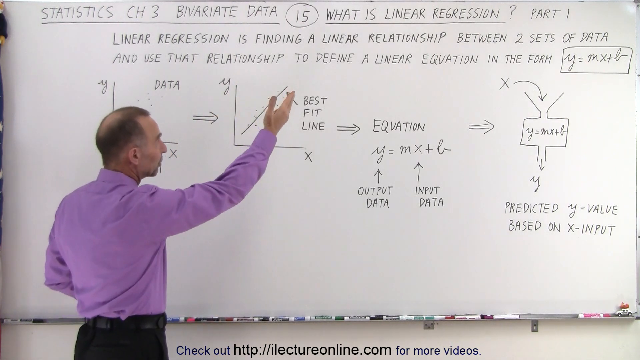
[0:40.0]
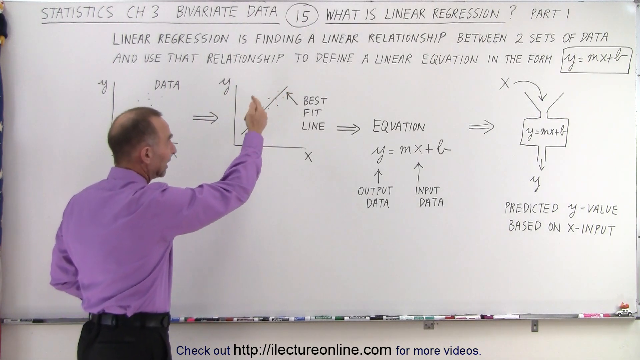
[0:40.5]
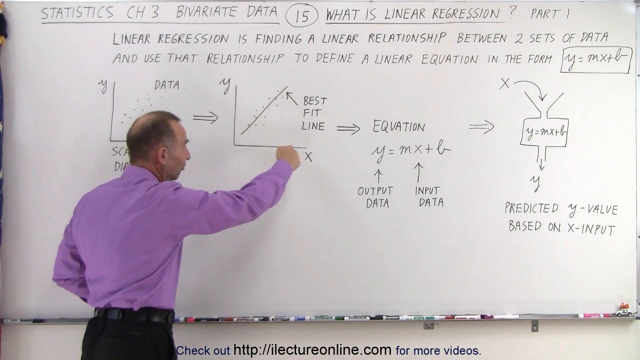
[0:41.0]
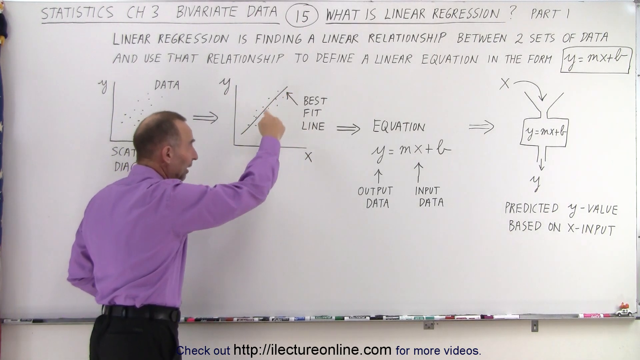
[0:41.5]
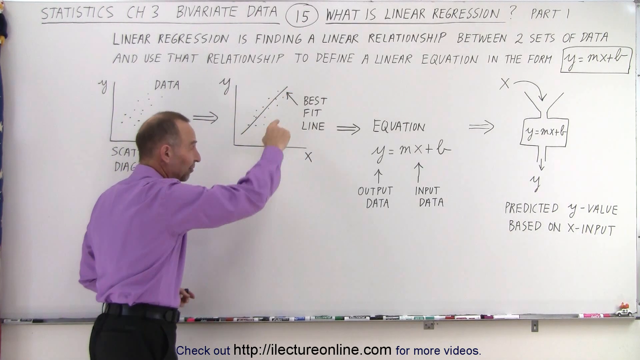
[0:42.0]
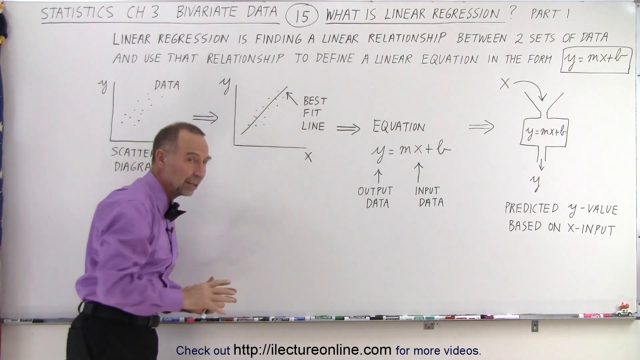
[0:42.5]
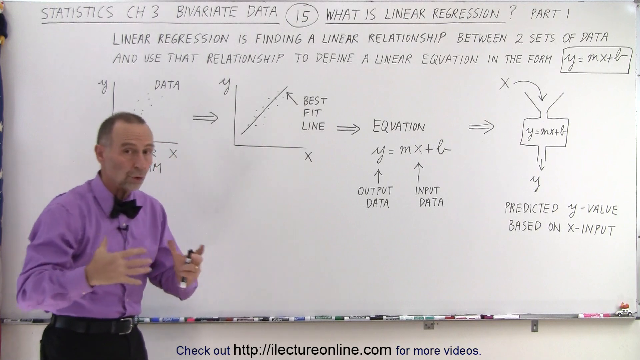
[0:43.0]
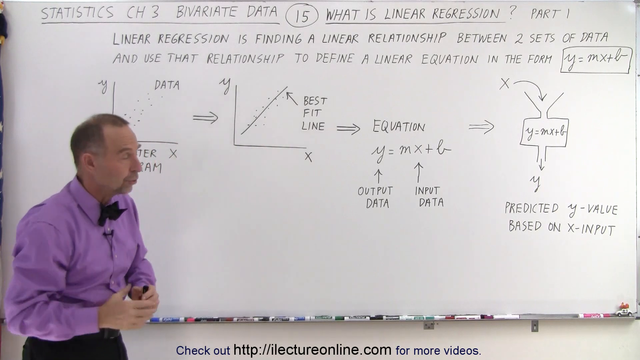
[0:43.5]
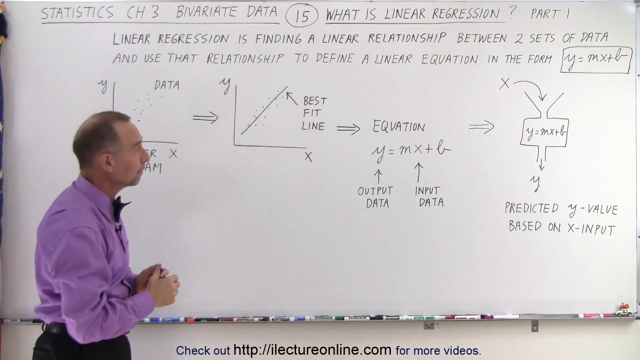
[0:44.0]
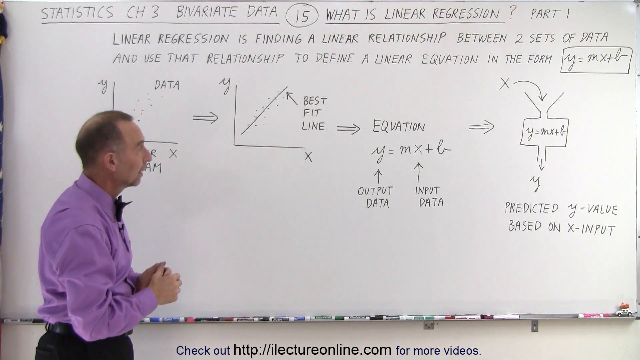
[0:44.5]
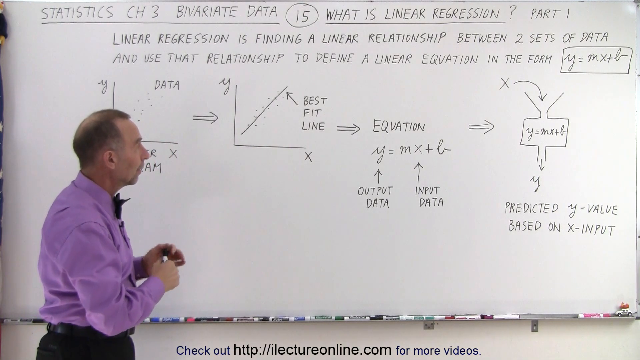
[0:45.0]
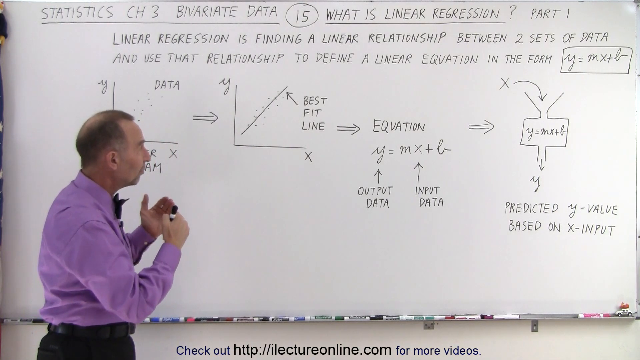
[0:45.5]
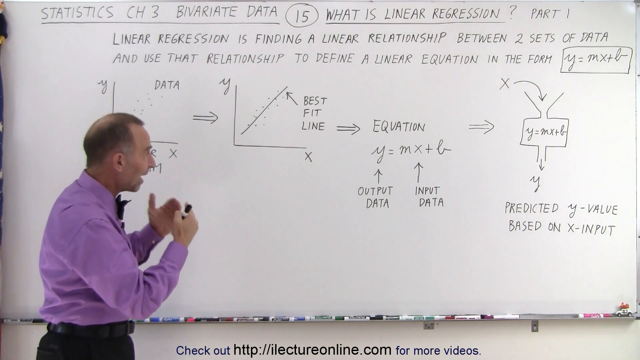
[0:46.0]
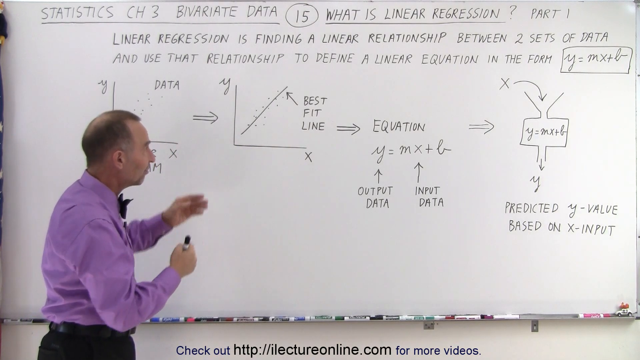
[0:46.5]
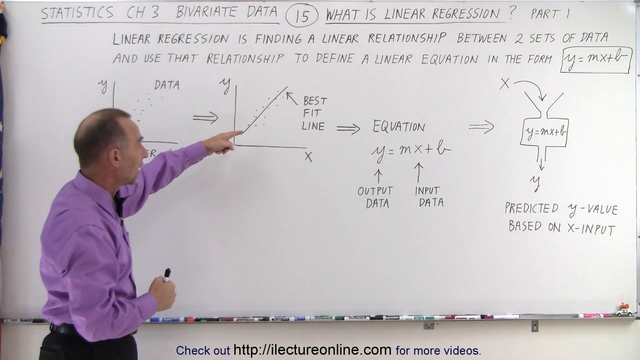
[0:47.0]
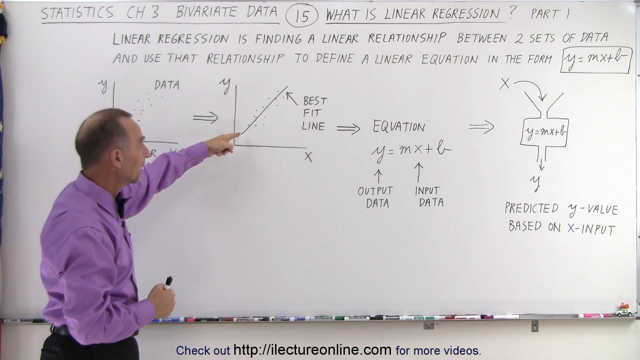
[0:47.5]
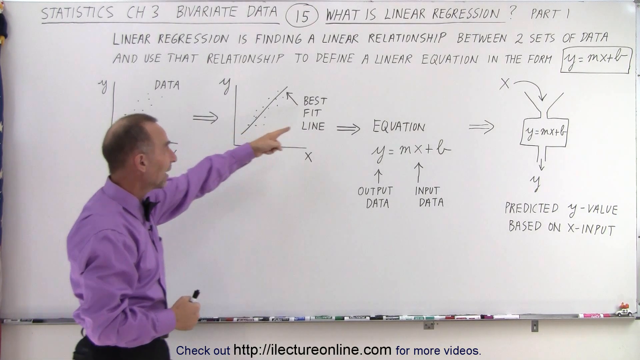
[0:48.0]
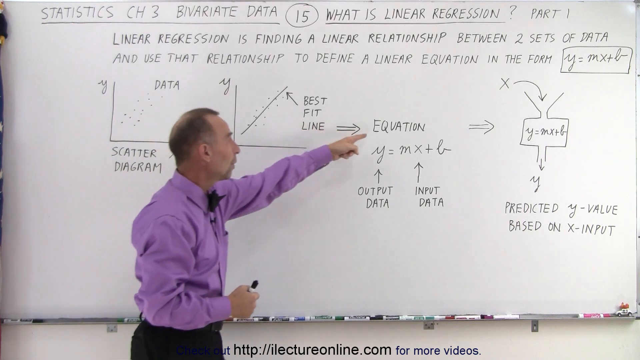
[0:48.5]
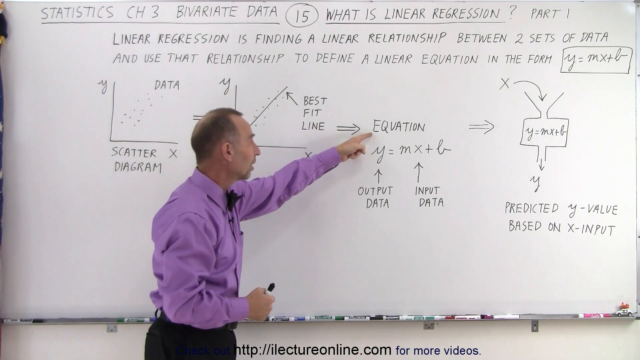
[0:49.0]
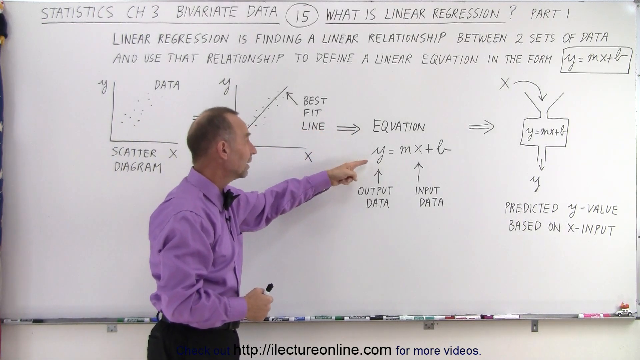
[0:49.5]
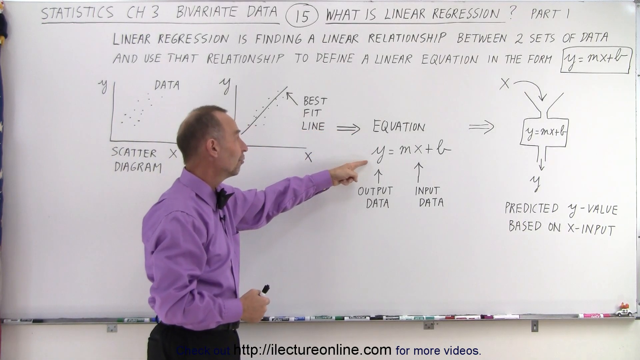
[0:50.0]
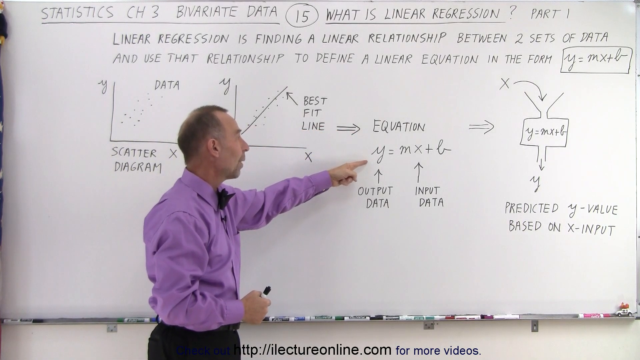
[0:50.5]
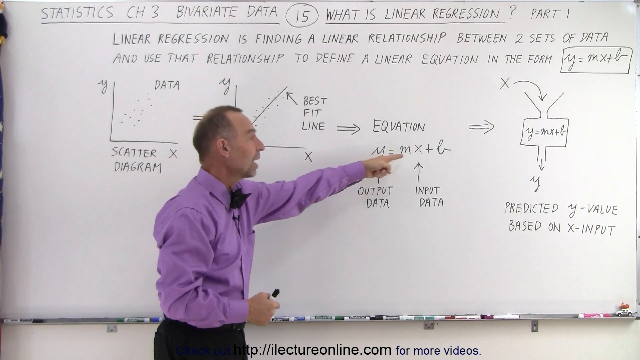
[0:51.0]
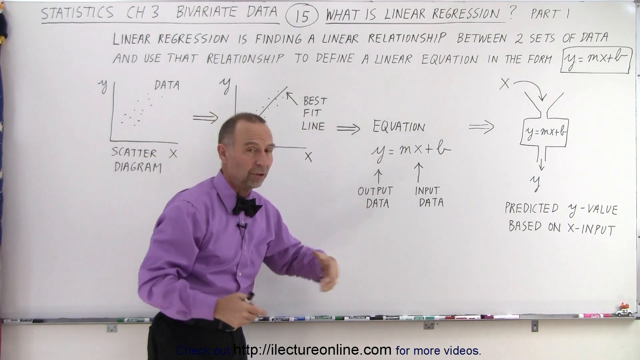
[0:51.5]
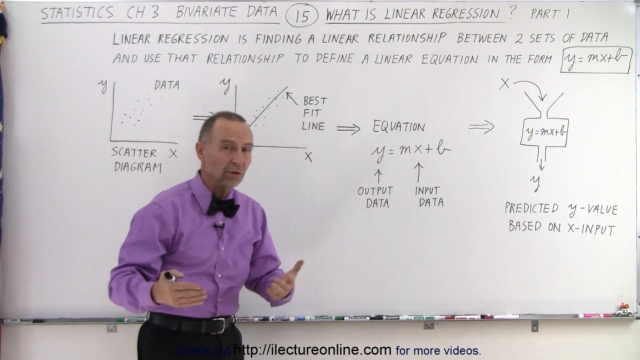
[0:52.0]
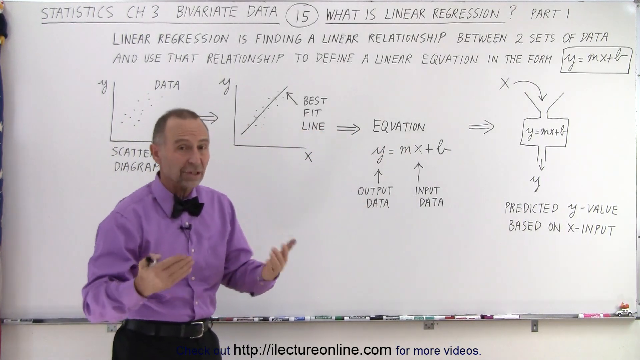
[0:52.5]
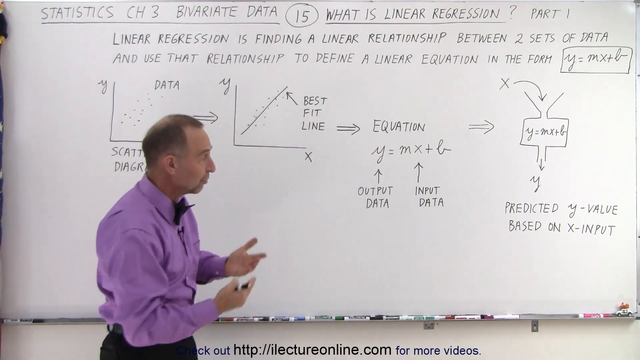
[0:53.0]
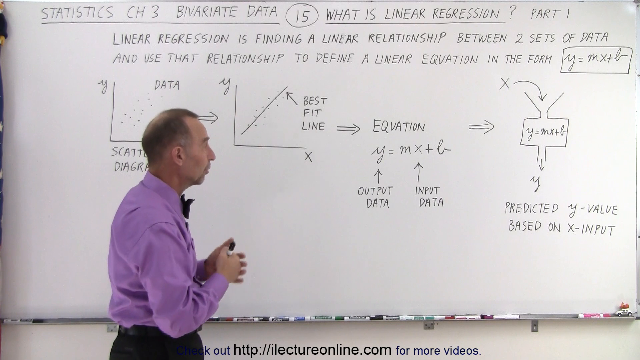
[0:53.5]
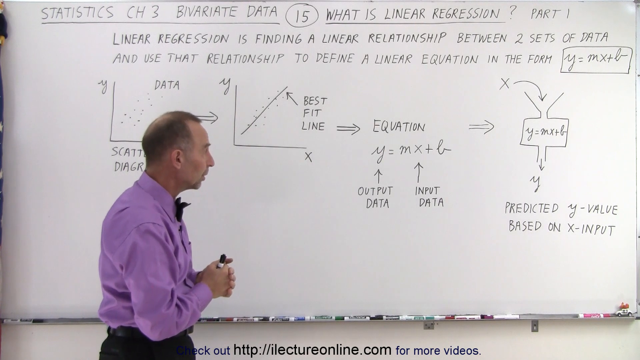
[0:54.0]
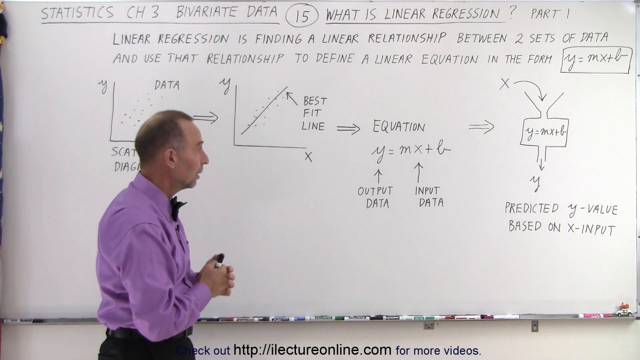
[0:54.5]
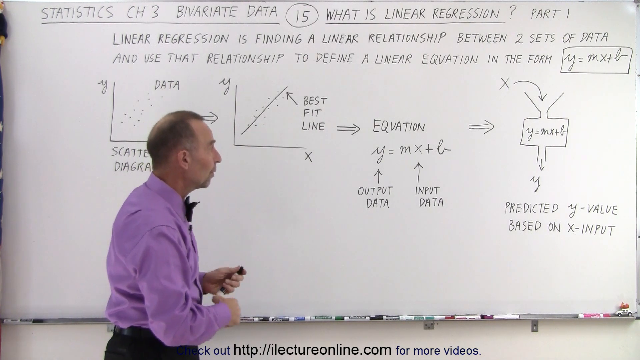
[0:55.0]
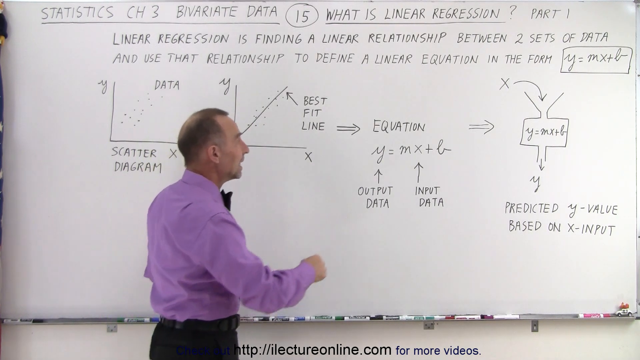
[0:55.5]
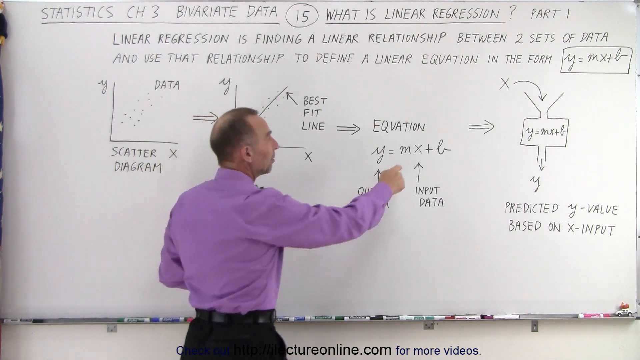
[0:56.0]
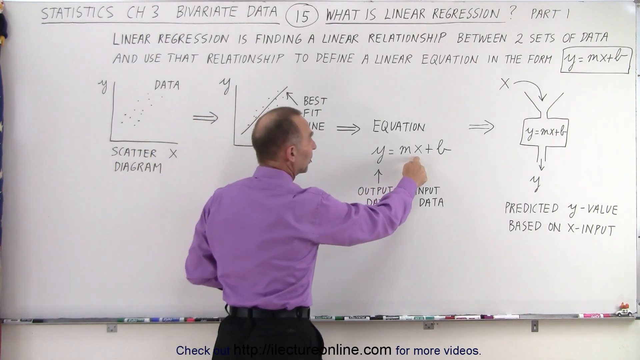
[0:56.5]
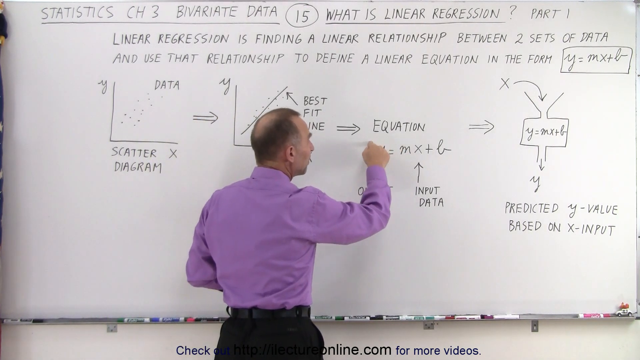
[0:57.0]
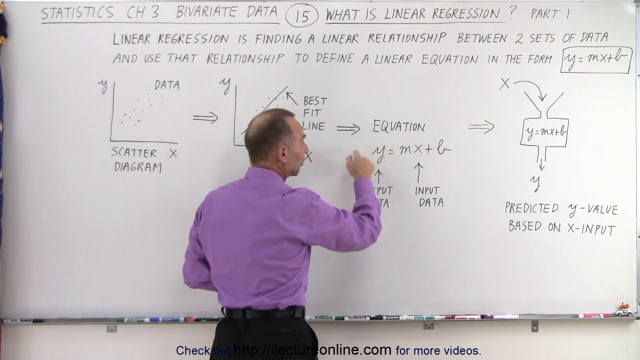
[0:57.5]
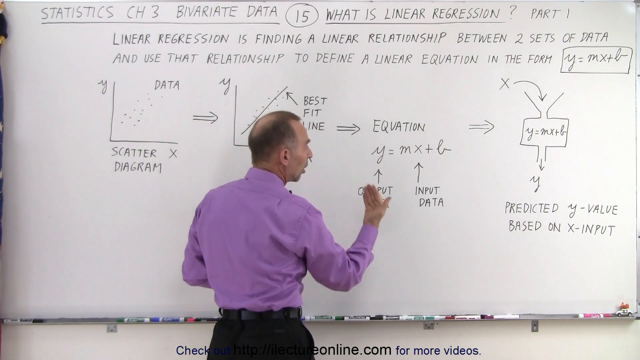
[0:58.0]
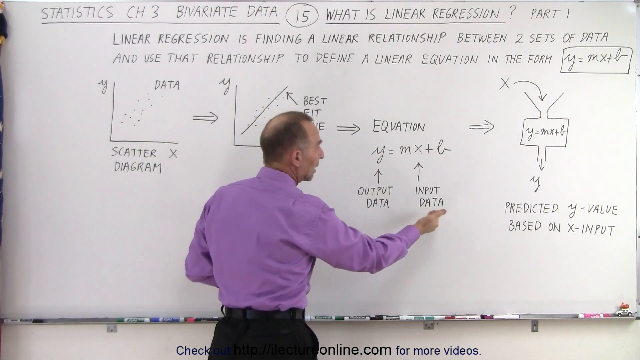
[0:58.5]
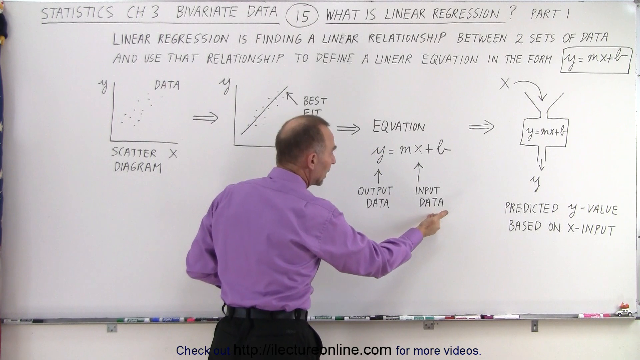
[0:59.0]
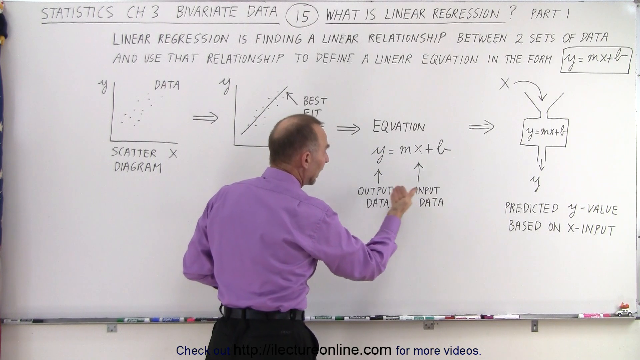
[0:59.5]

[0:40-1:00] The lecturer continues his lecture, mostly looking at the camera, which suggests it is apparently an online lecture rather than a physical one. The setting and the whiteboard are unchanged; nothing has been erased from or added to the writing on the board, and he lectures by pointing to what he has written and drawn. Markers of different colors are visible on the whiteboard: white, blue and black, with a green one also spotted behind him as he moves.